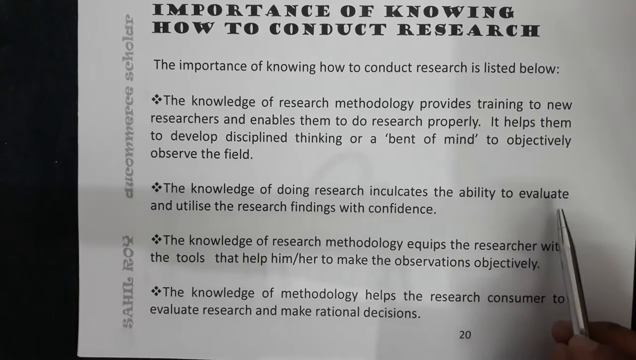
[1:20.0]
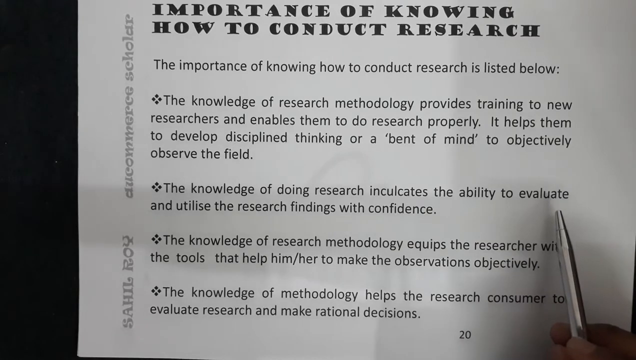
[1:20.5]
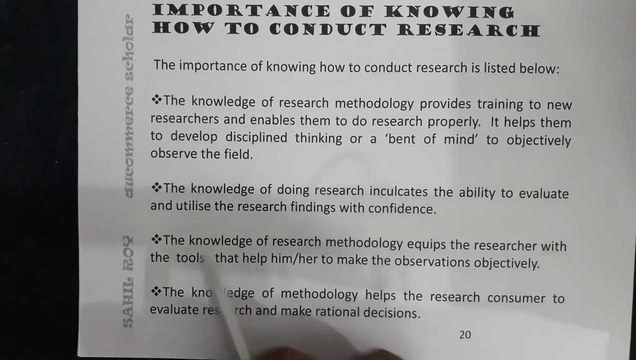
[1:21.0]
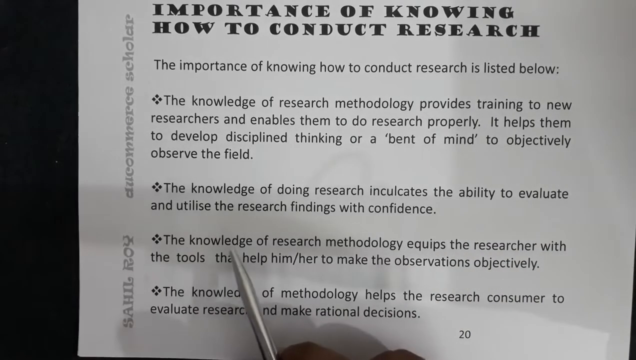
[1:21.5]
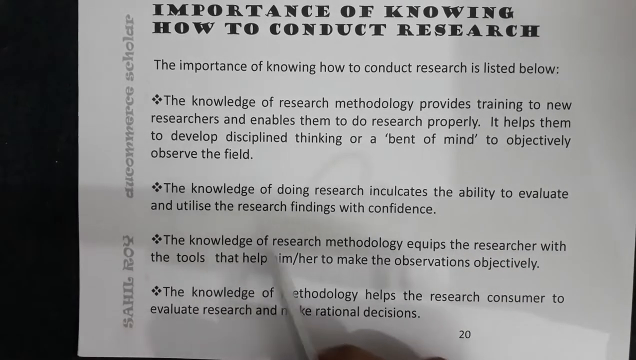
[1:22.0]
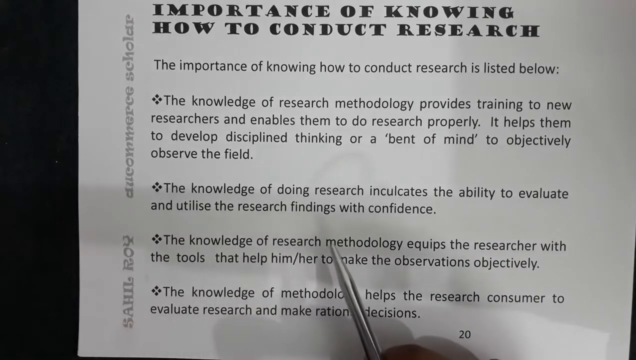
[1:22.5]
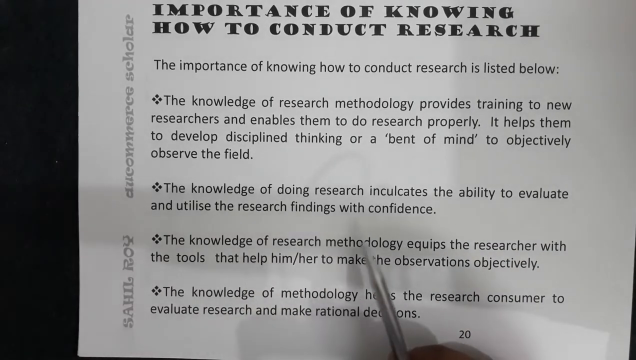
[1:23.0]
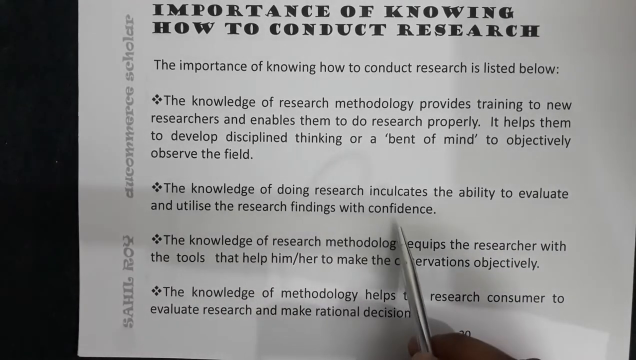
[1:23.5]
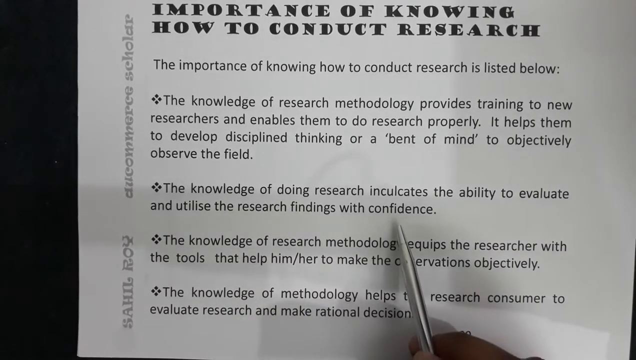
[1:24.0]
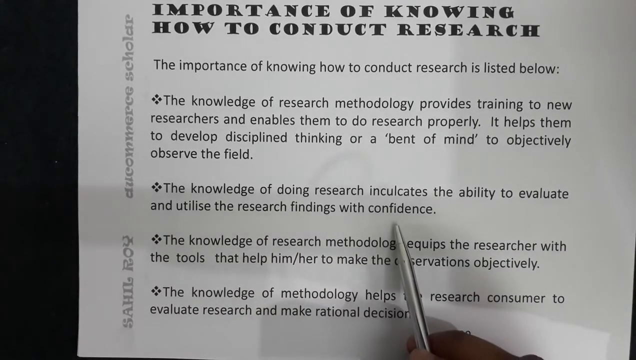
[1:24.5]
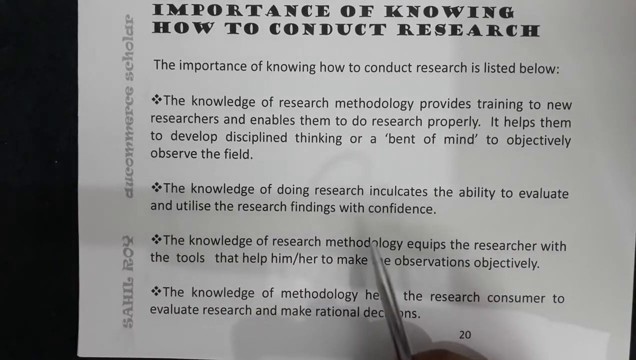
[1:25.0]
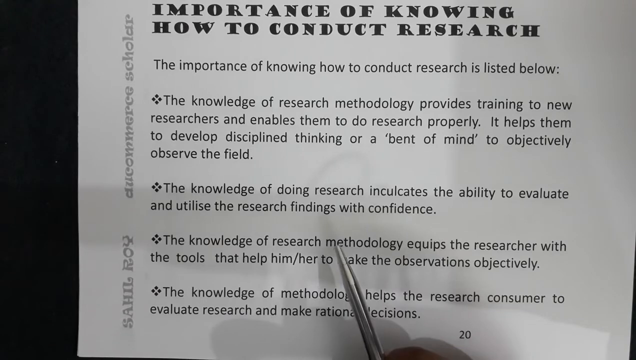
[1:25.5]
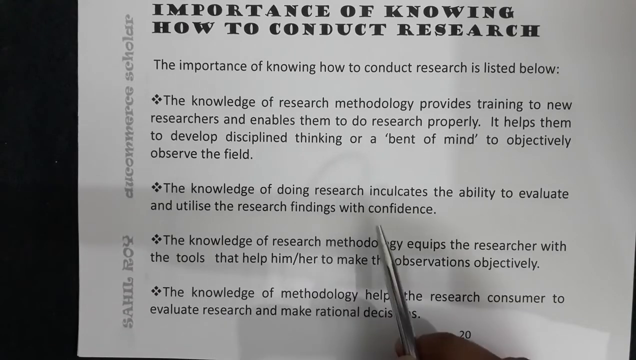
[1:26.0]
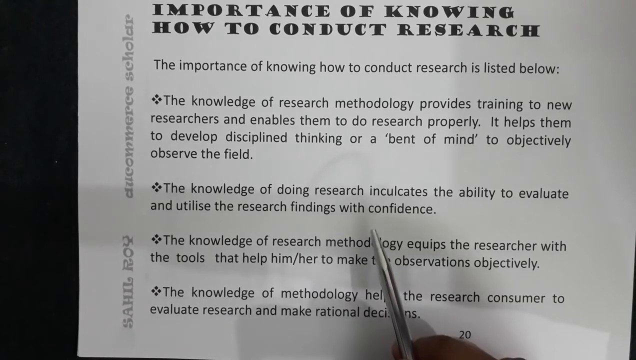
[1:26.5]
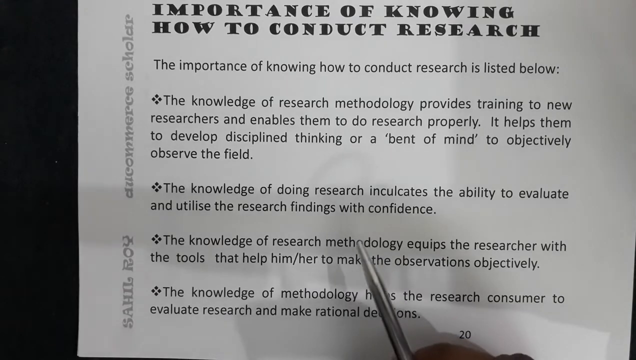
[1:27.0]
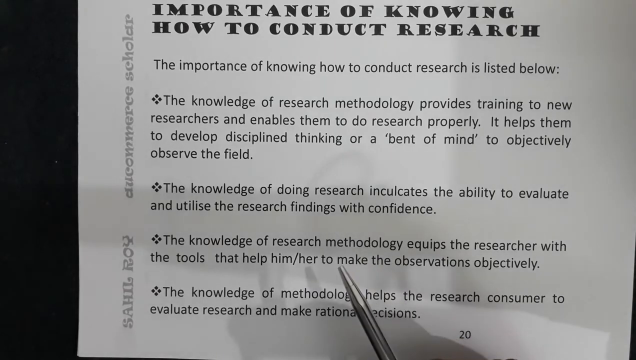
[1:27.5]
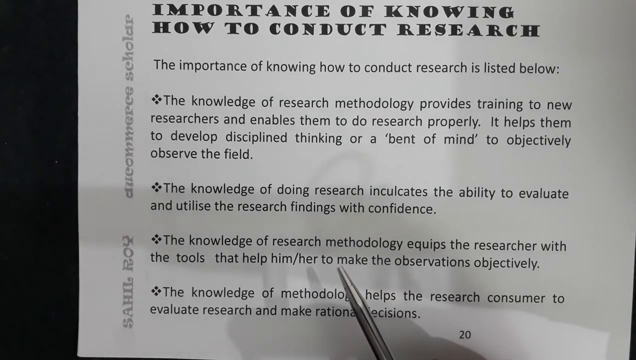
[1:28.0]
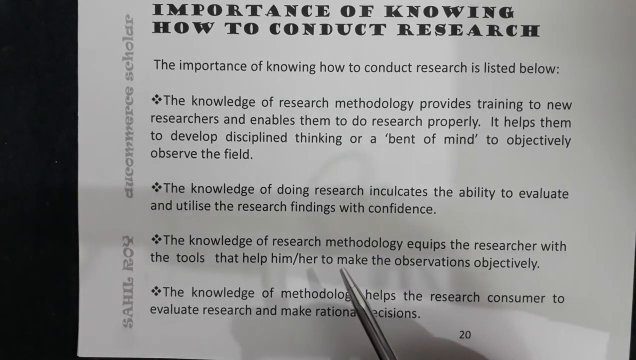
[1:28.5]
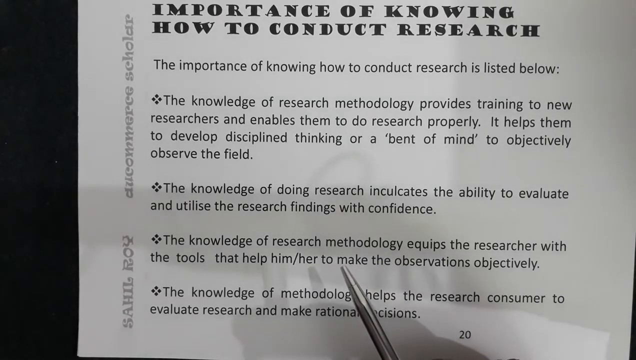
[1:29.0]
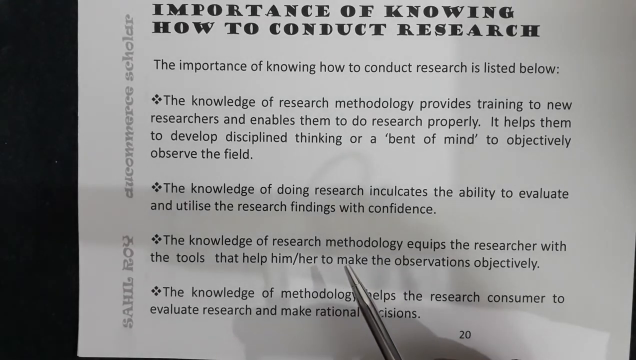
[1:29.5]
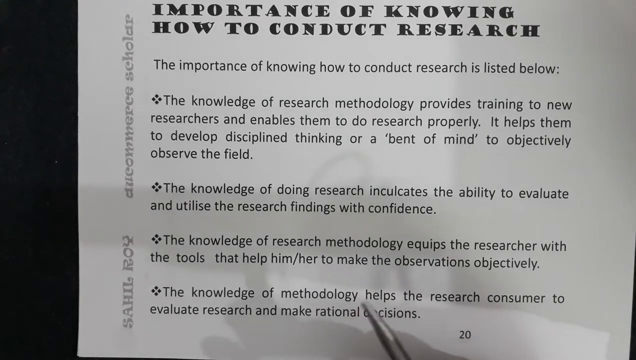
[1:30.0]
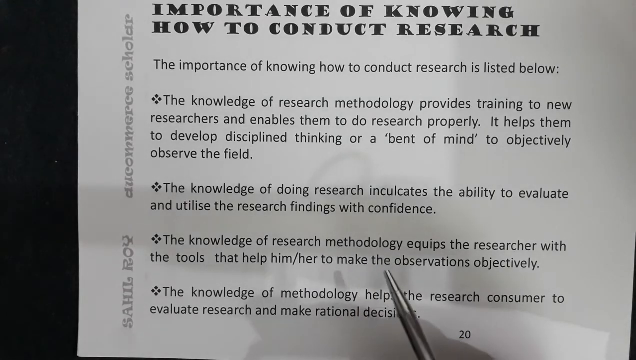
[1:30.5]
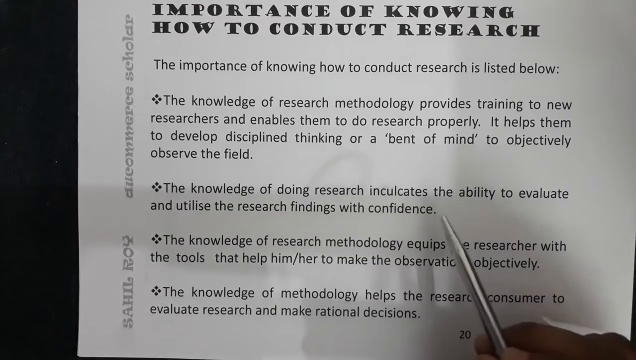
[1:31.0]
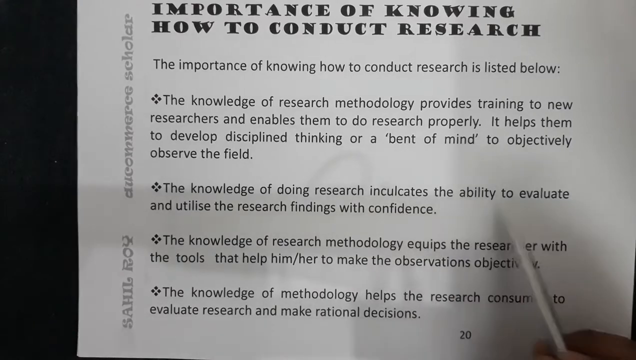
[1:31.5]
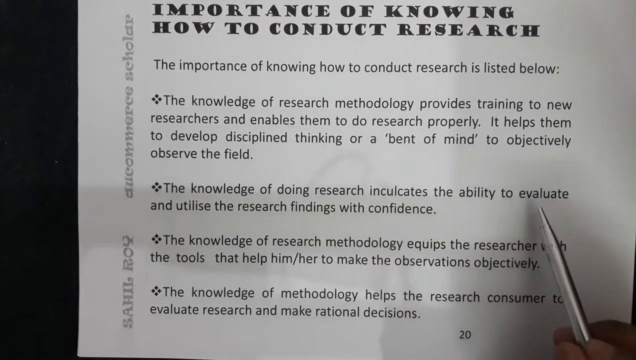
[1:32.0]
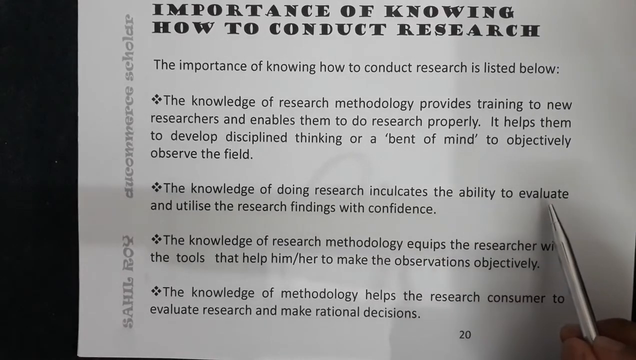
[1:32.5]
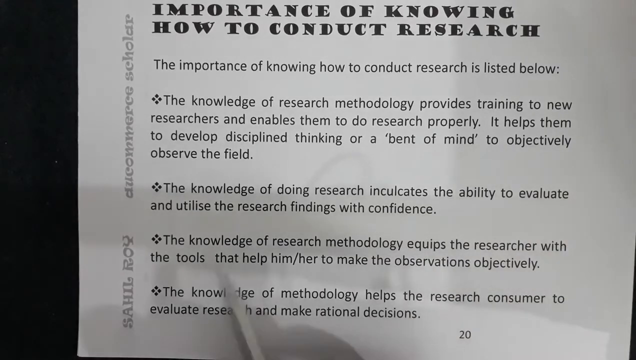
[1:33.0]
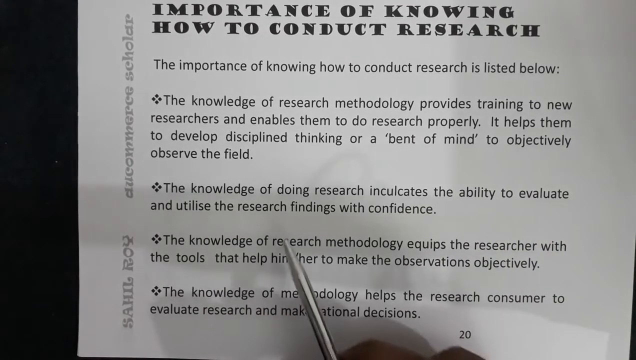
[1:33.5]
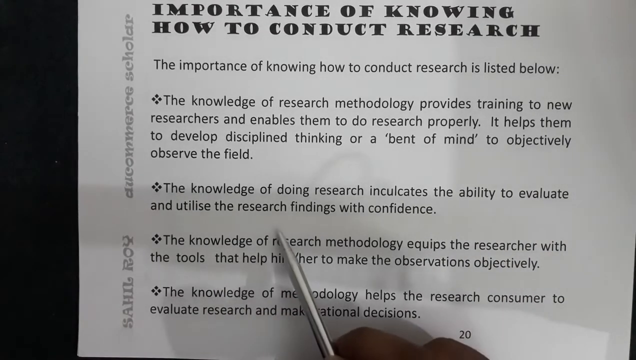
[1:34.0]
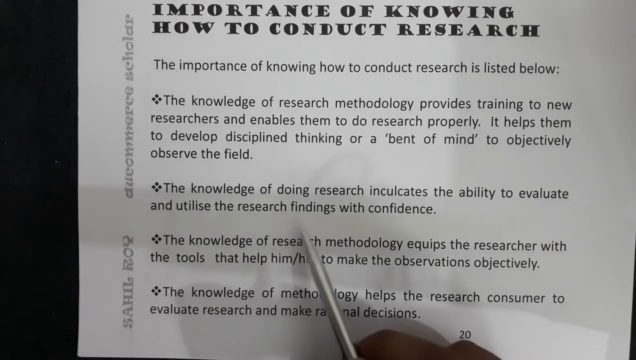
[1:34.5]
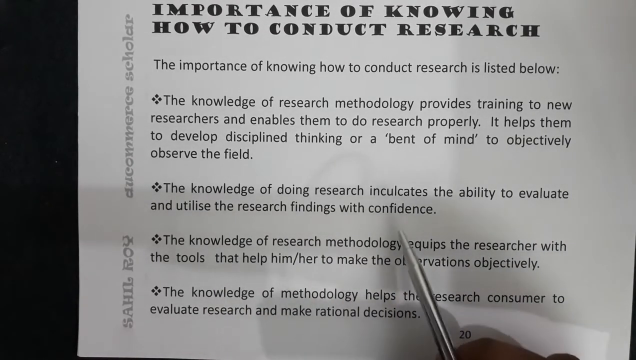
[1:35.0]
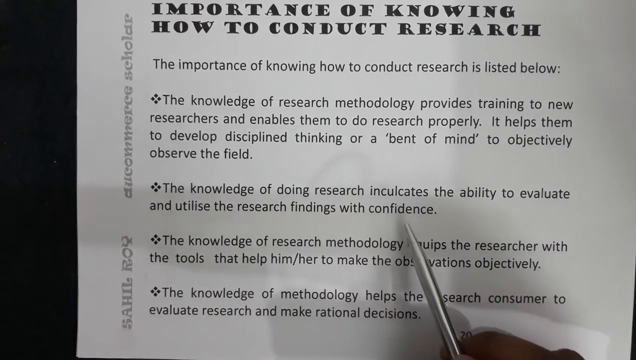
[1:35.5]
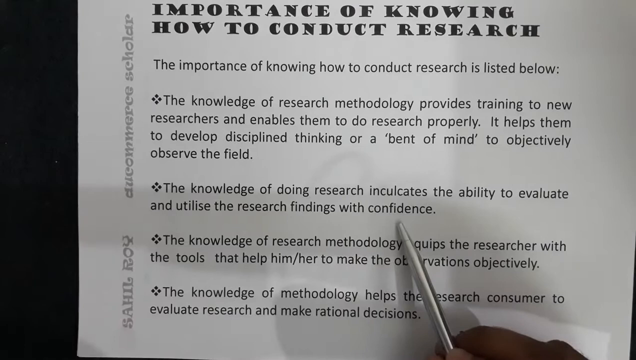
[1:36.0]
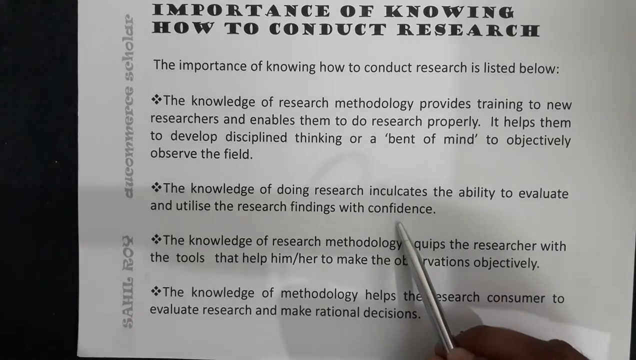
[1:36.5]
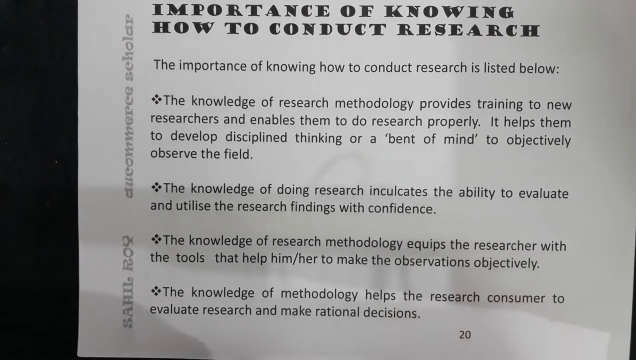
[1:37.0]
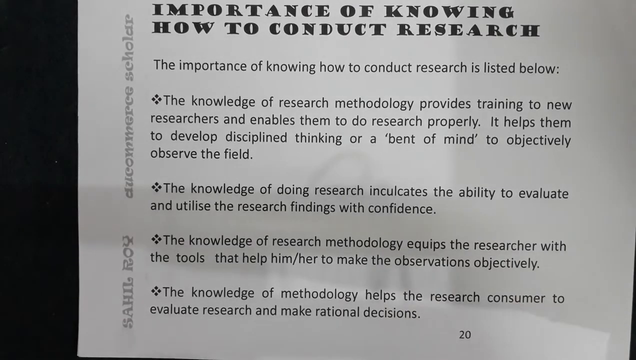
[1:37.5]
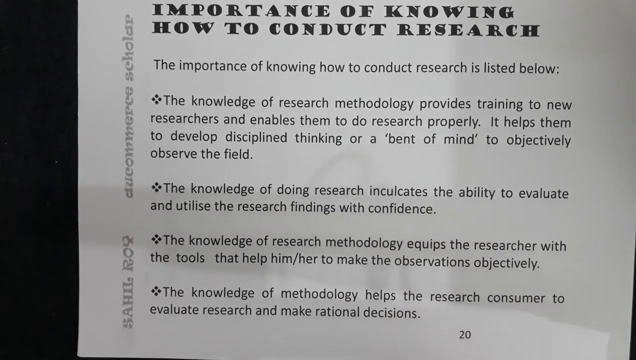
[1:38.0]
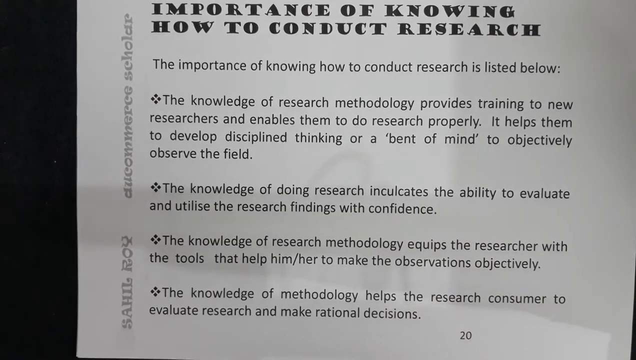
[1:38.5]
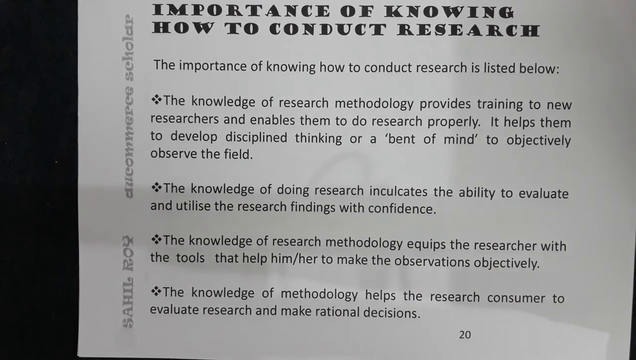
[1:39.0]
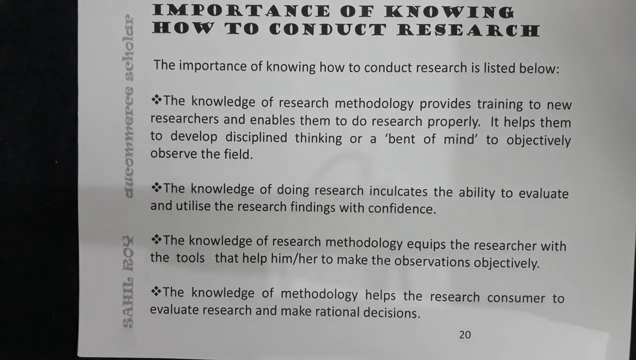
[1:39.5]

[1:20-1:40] A sheet of white printer paper has "DU Commerce Scholar" on the left margin. At the top, in bold, it says "the importance of knowing how to conduct research," and the text below says "the importance of knowing how to conduct research is listed below," followed by statements about the knowledge of research methodology, including "Knowledge of research inculcates the ability to evaluate and utilize the research findings with confidence" and "Knowledge of research methodology helps research consumers to evaluate research and make rational decisions." The person presenting points out different words with a silver-looking pen, reading through the whole sheet.